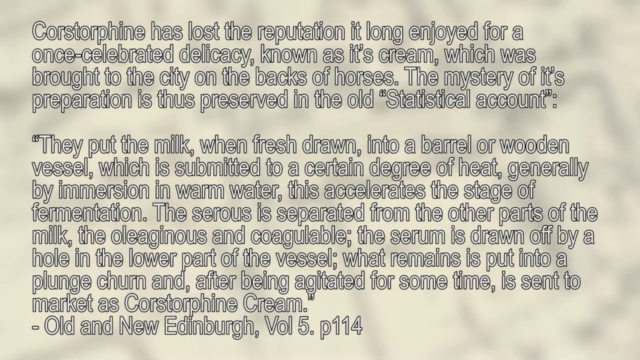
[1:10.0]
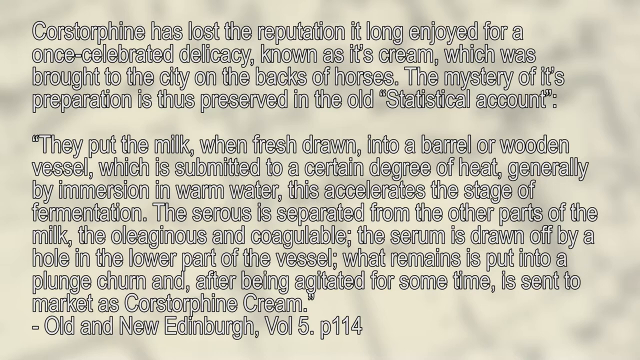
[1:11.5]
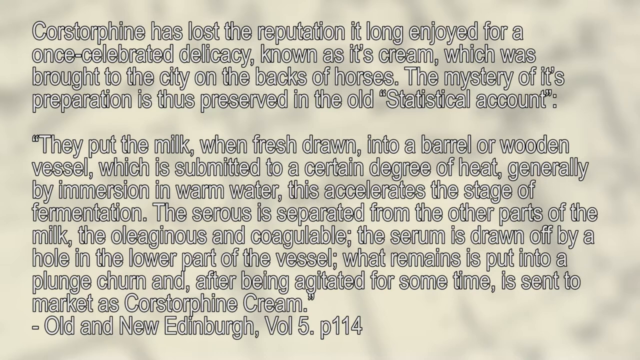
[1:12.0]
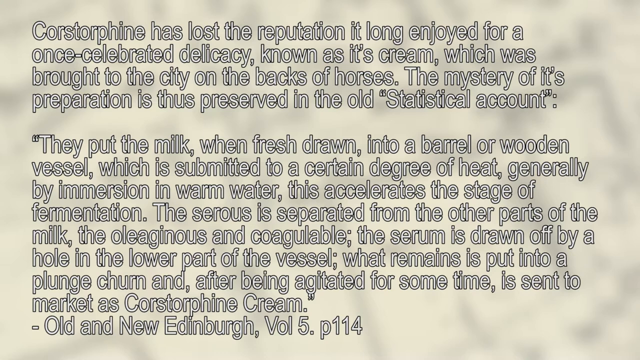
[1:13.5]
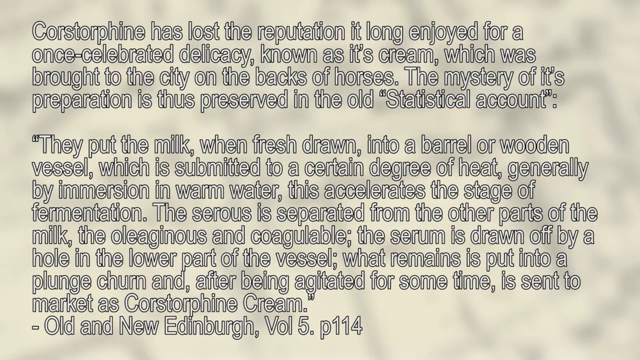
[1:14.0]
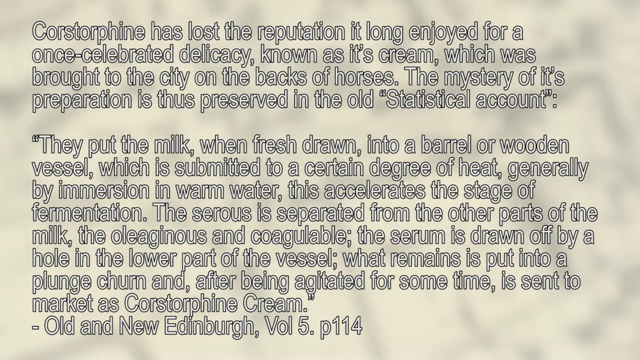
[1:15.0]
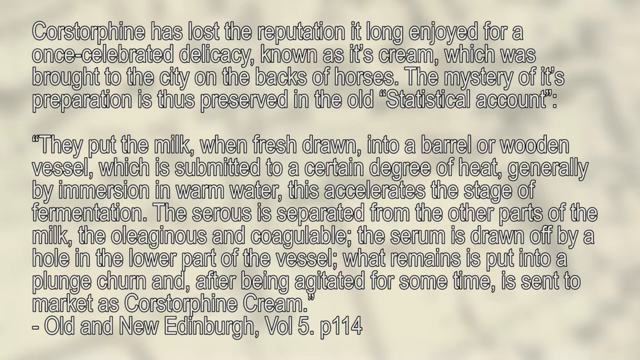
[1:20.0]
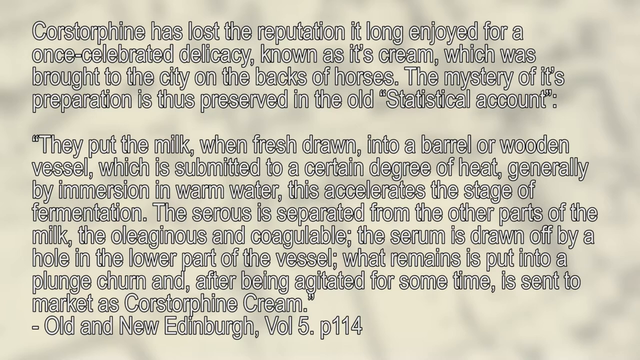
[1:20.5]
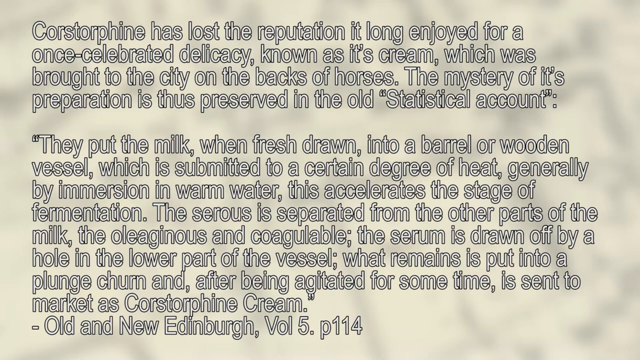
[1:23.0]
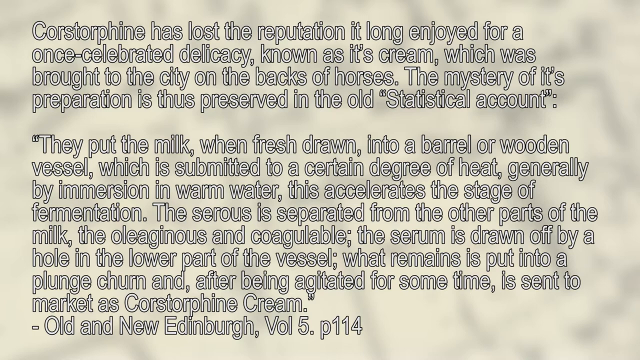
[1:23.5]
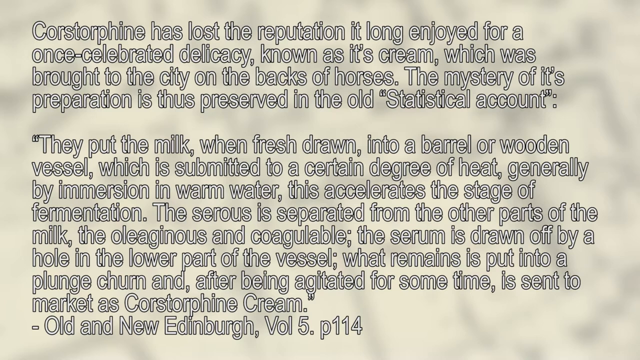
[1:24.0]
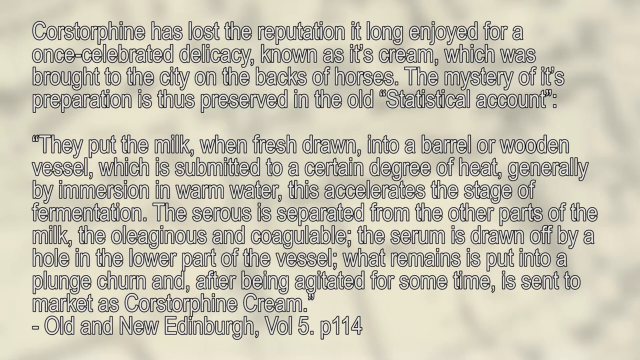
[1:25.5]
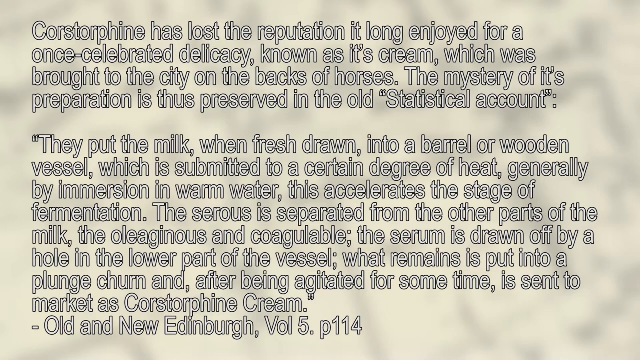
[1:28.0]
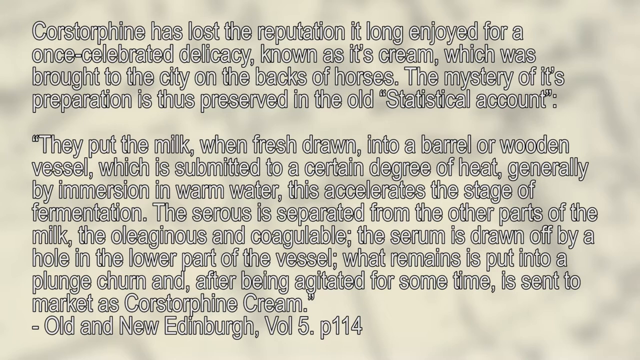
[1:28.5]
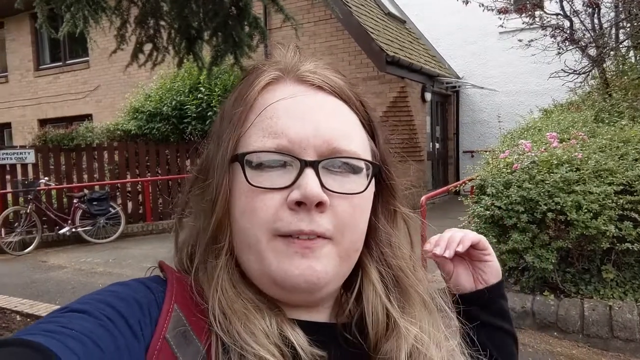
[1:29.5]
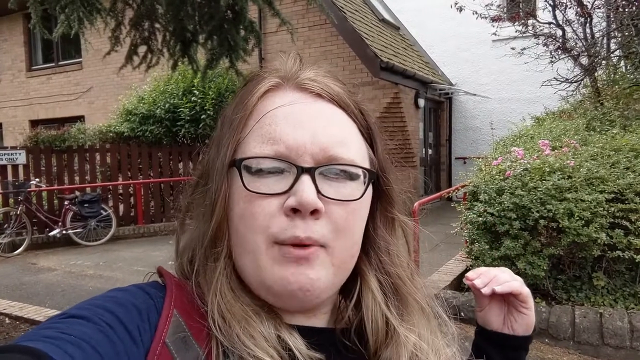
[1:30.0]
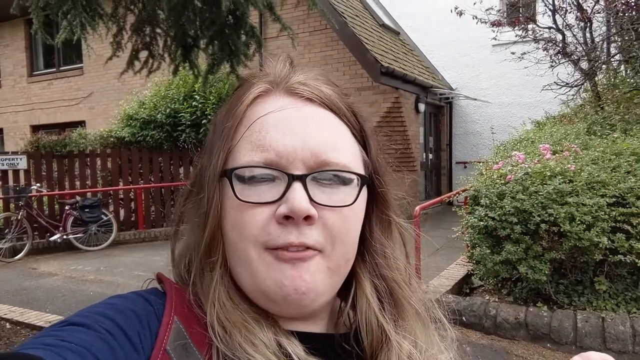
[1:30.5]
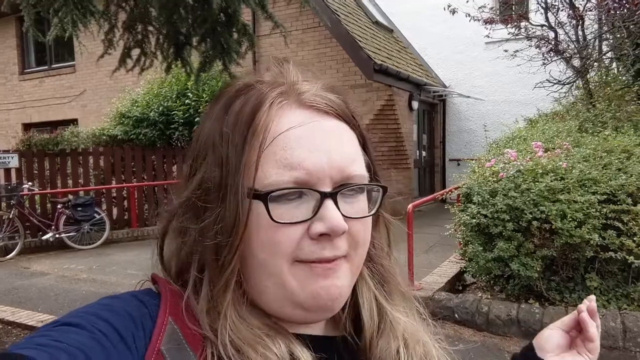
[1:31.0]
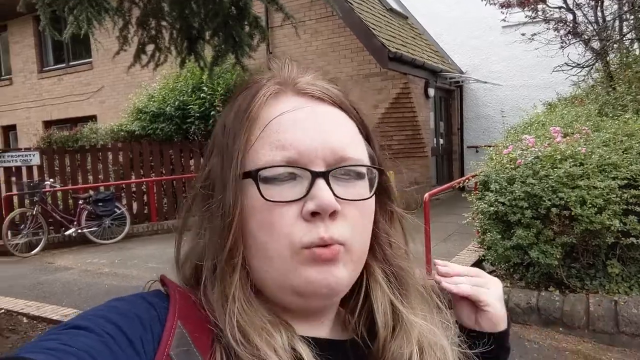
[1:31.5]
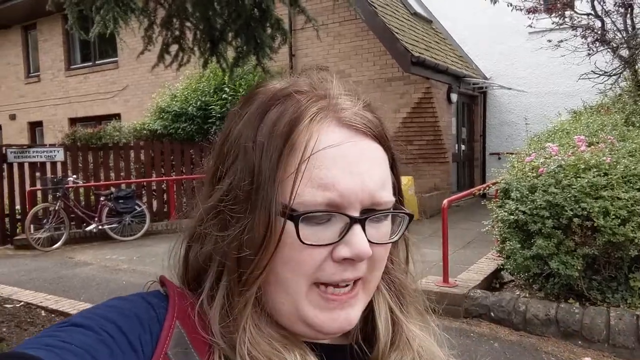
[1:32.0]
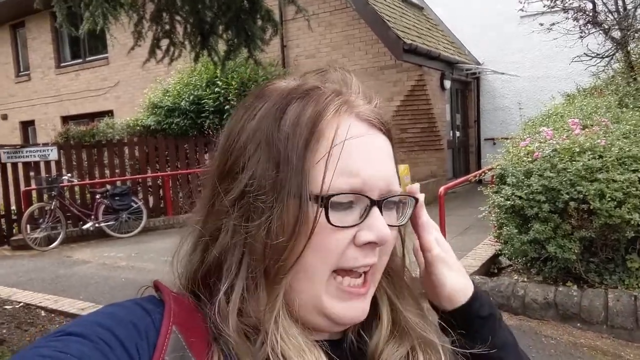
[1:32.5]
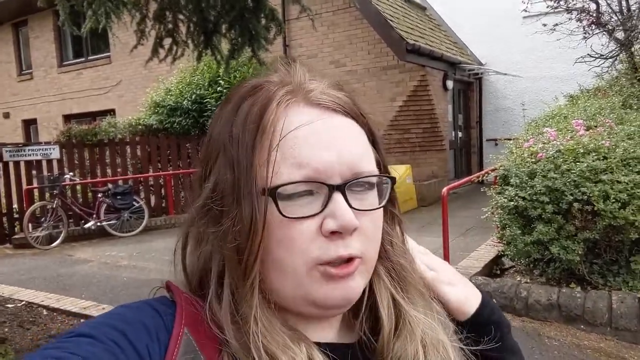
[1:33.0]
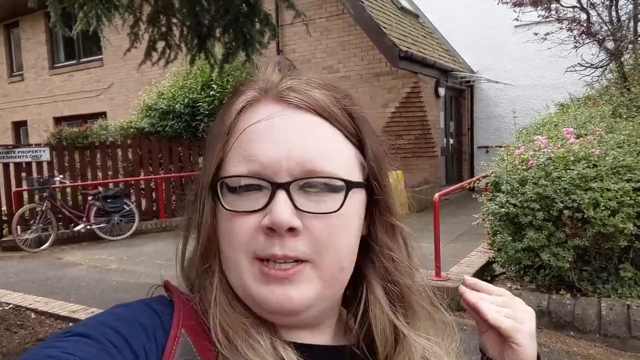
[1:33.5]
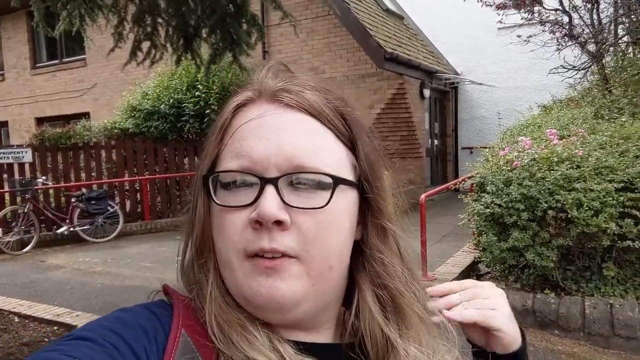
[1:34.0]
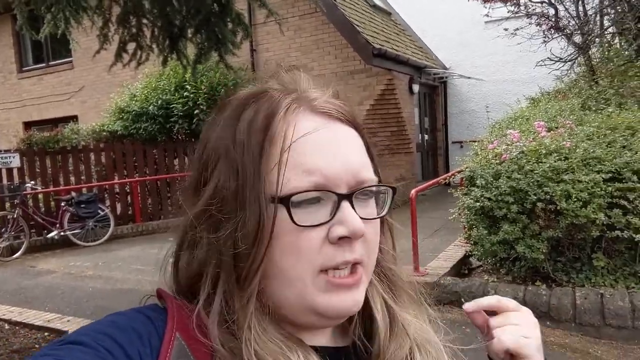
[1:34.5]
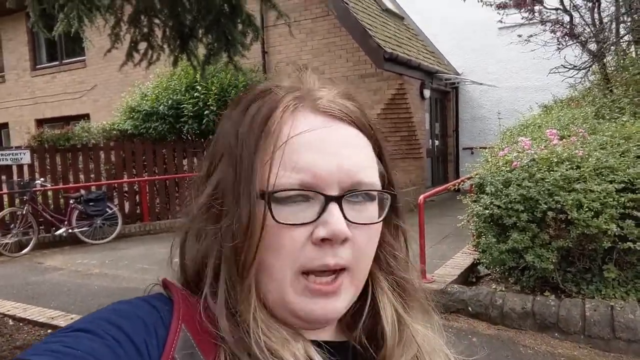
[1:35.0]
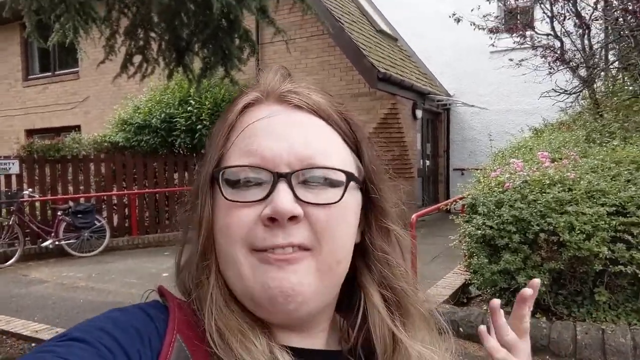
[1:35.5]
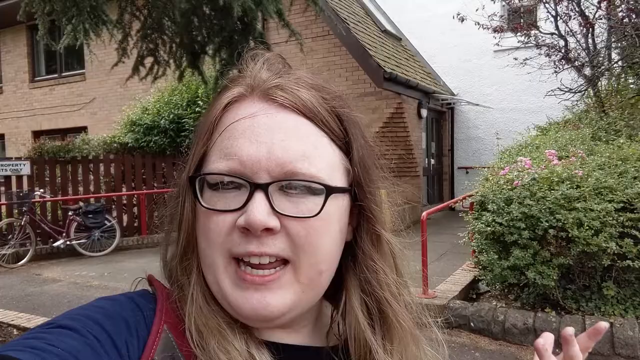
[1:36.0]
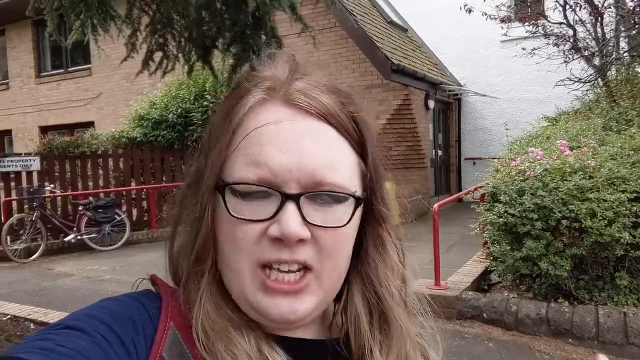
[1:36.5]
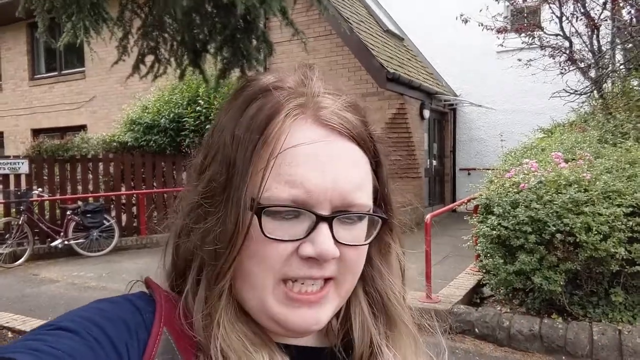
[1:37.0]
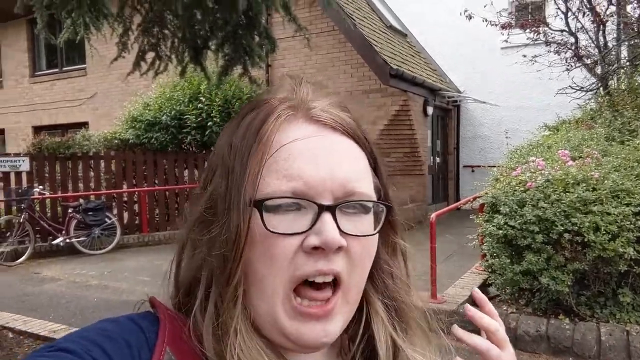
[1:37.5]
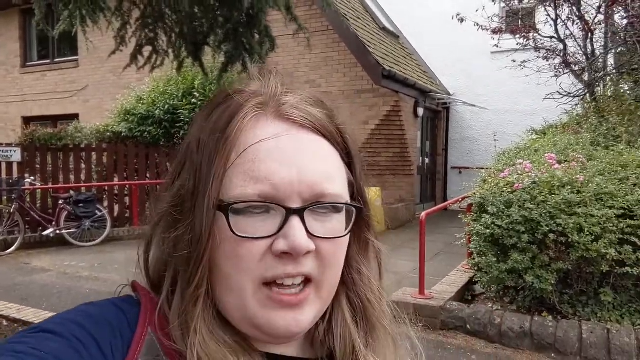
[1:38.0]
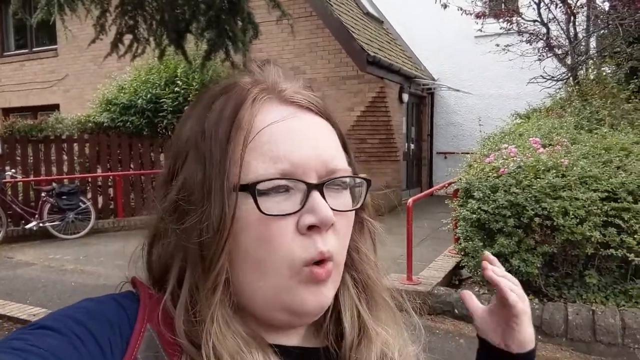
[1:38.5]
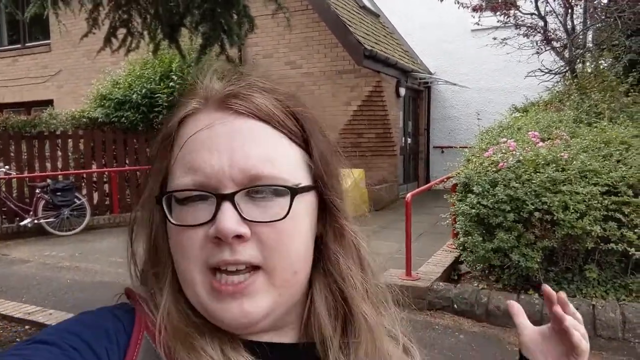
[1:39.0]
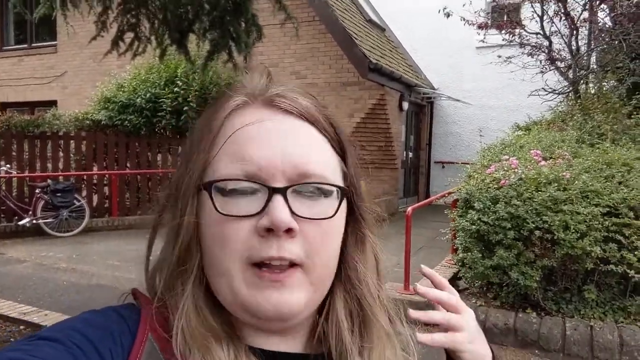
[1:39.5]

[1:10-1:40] The quote about Corstorphine cream is still on screen at first. When it ends, the video returns to the woman outside the flats. She has moved slightly down the walkway, and big bushes, some of them flowering, are behind her. The video then goes back to the text.